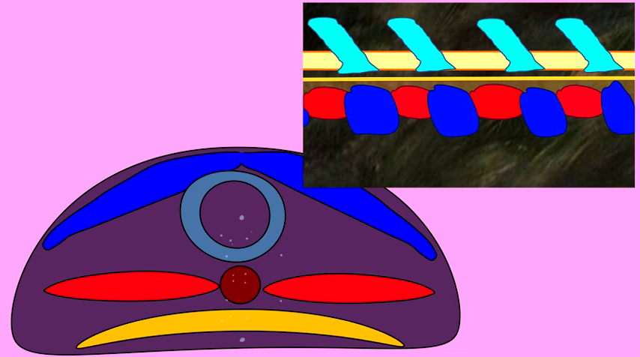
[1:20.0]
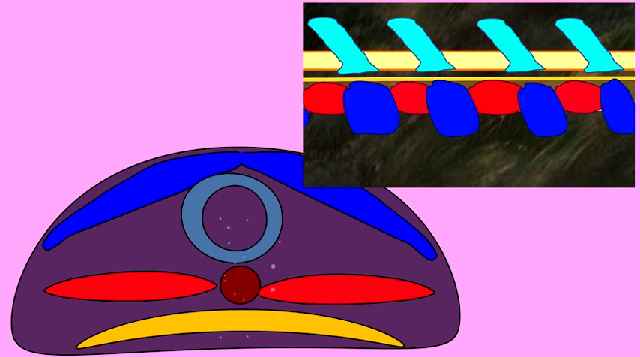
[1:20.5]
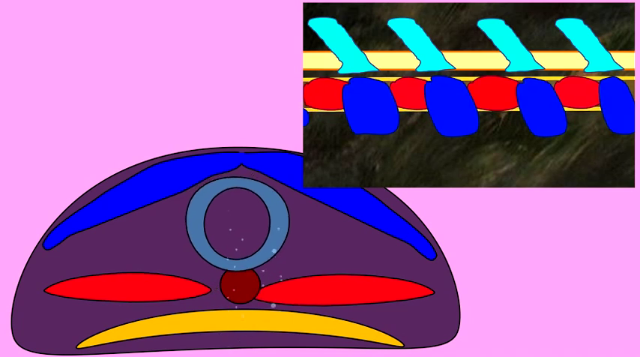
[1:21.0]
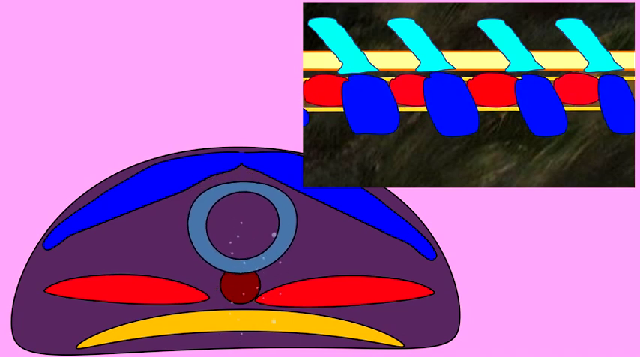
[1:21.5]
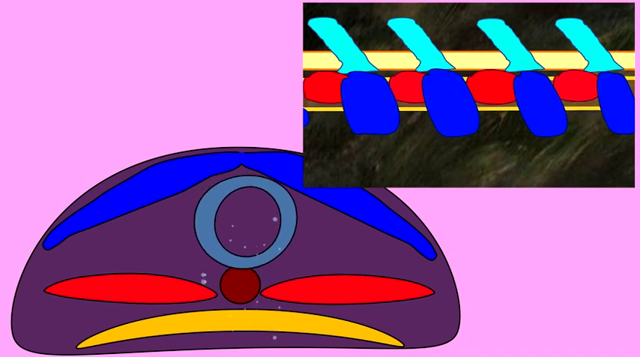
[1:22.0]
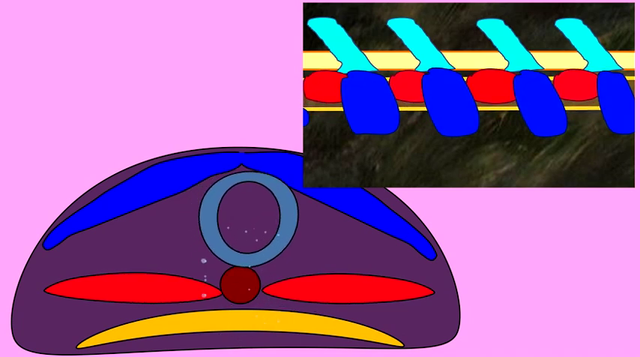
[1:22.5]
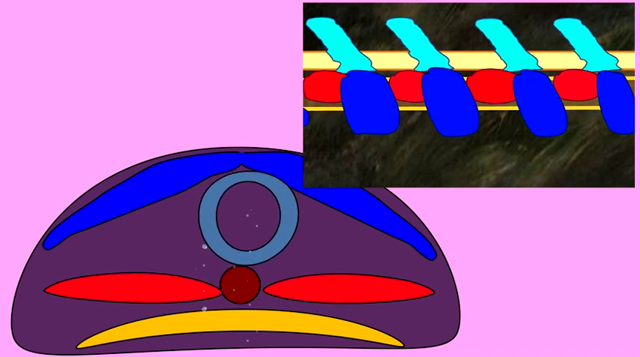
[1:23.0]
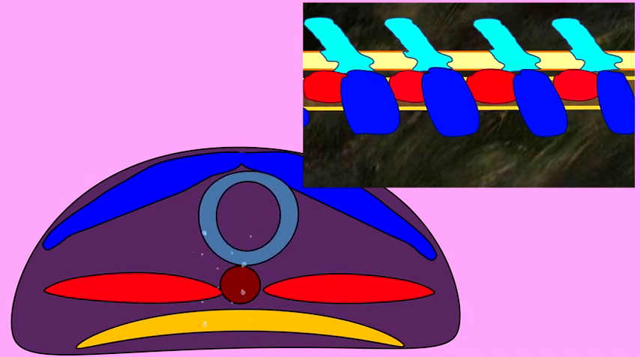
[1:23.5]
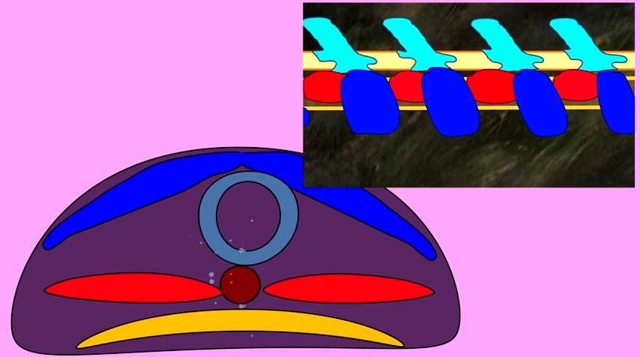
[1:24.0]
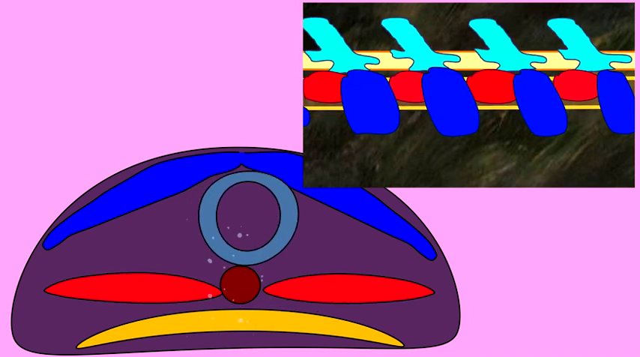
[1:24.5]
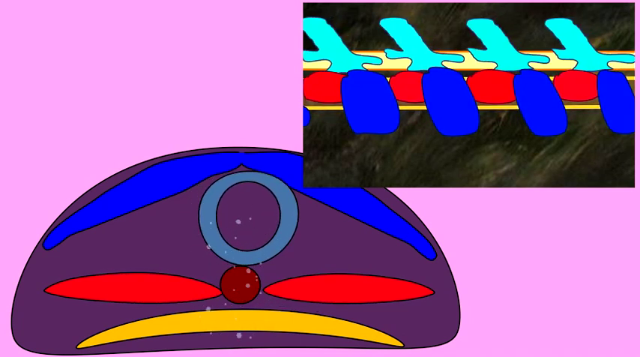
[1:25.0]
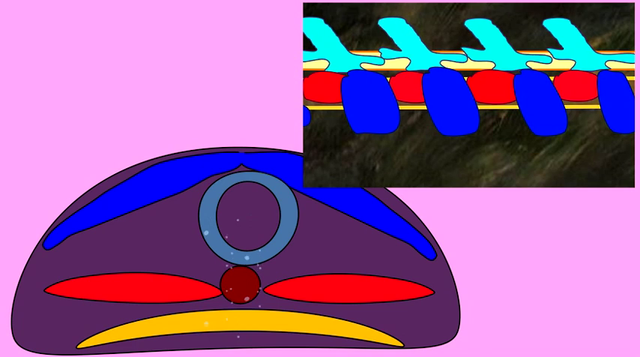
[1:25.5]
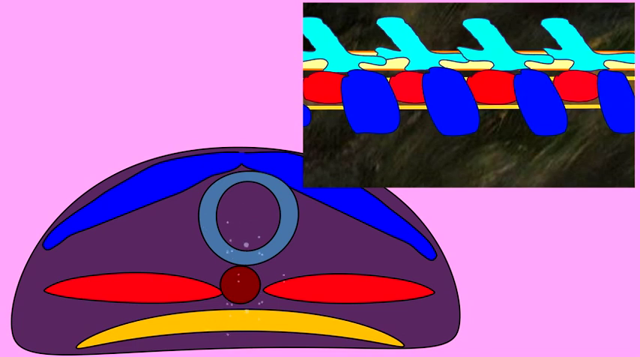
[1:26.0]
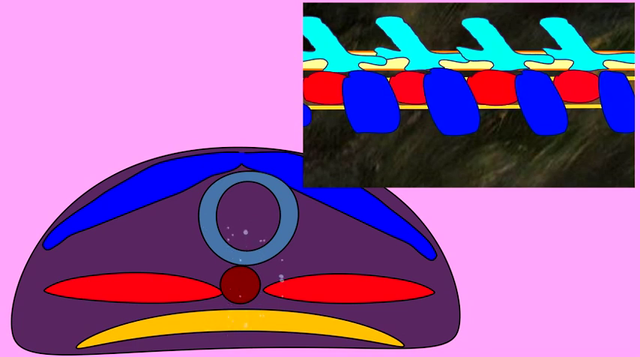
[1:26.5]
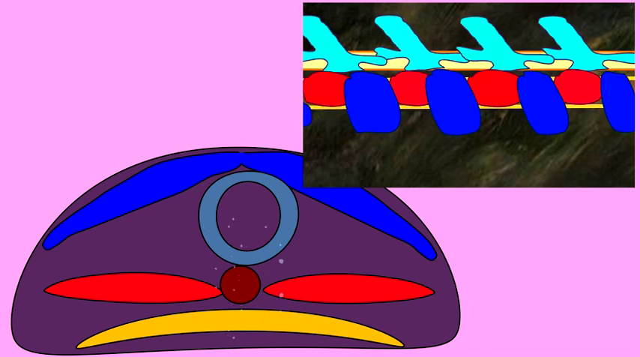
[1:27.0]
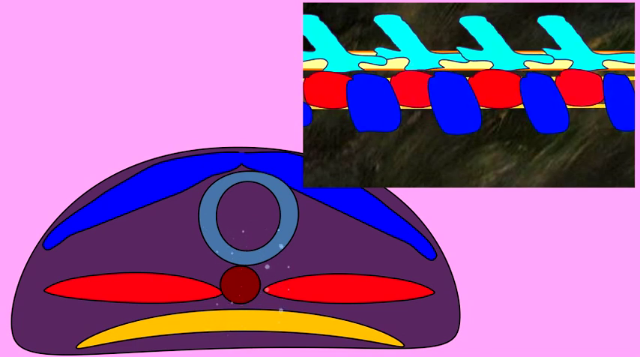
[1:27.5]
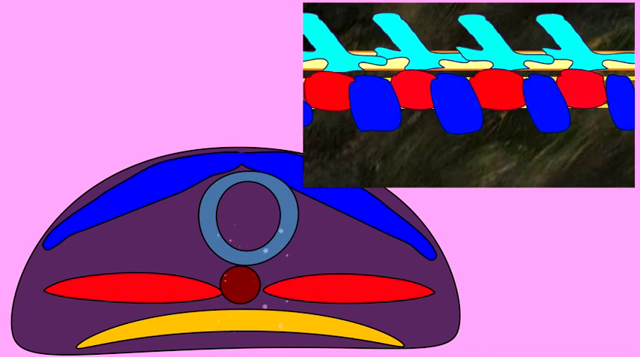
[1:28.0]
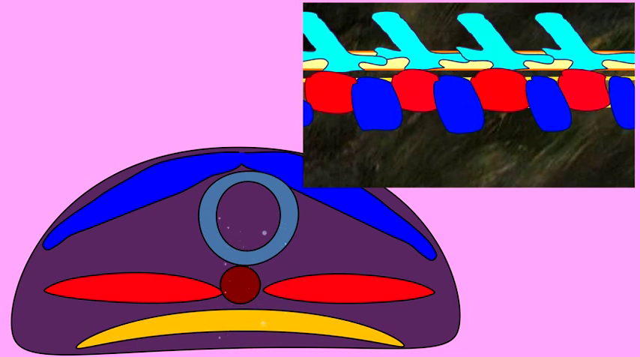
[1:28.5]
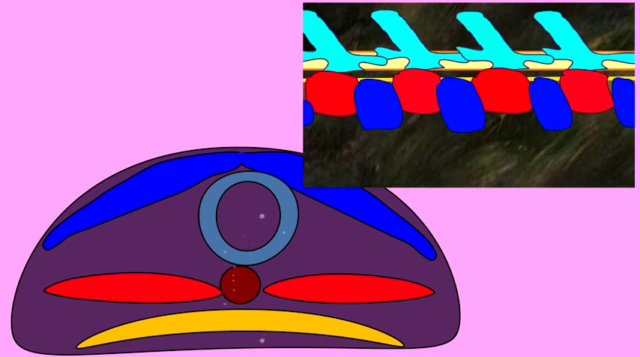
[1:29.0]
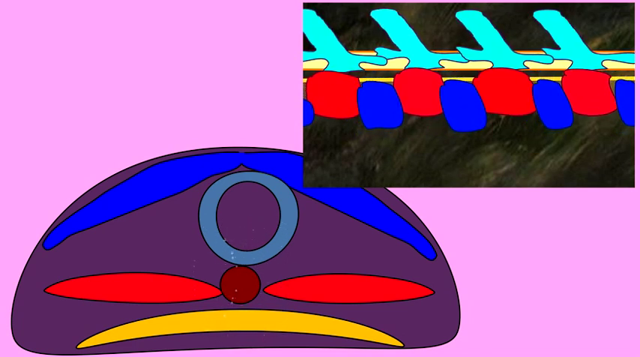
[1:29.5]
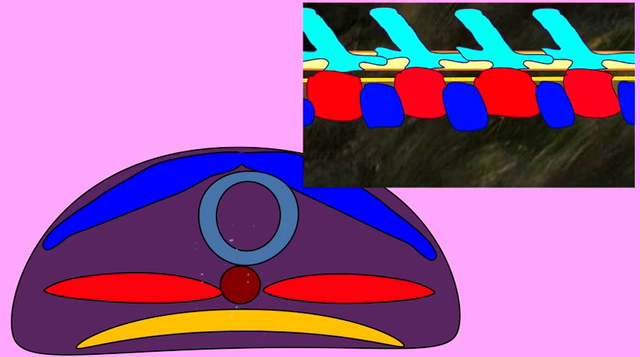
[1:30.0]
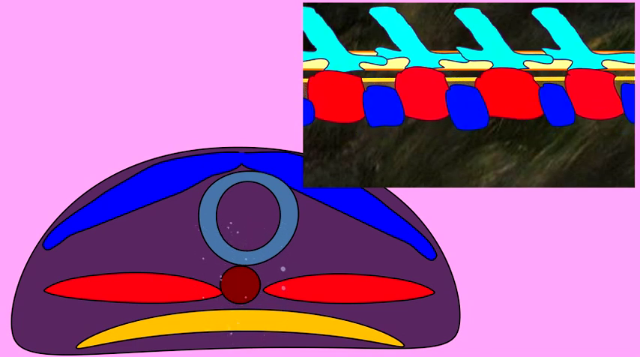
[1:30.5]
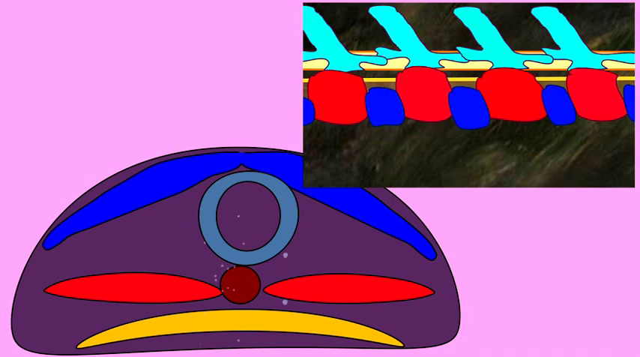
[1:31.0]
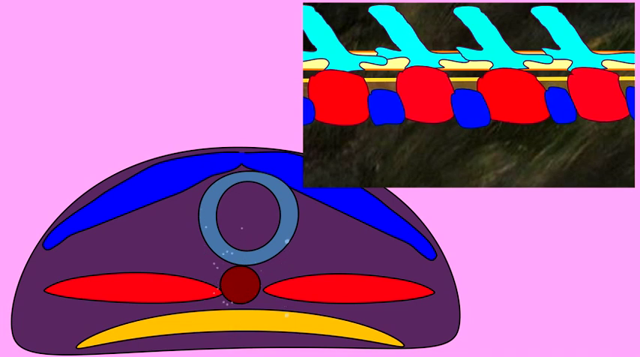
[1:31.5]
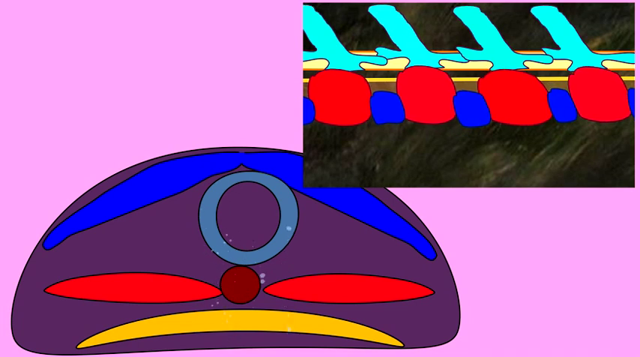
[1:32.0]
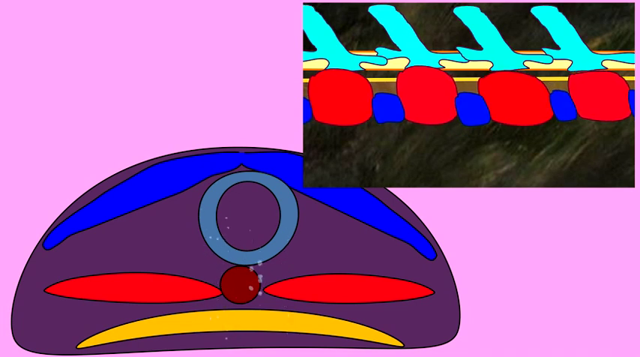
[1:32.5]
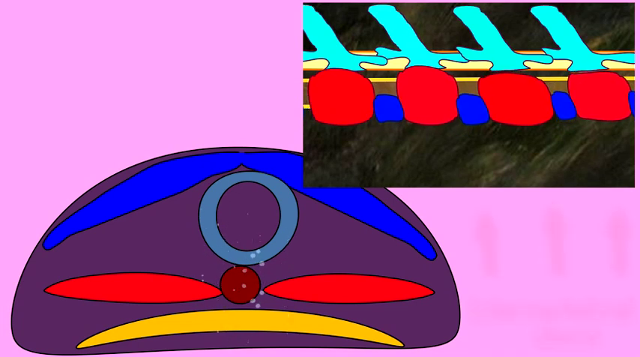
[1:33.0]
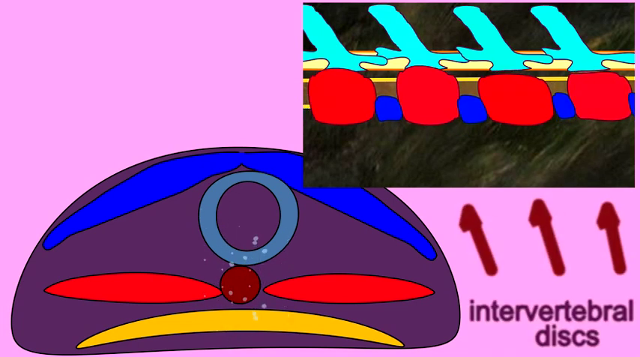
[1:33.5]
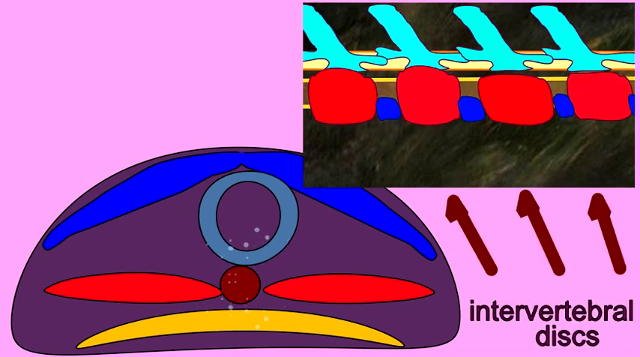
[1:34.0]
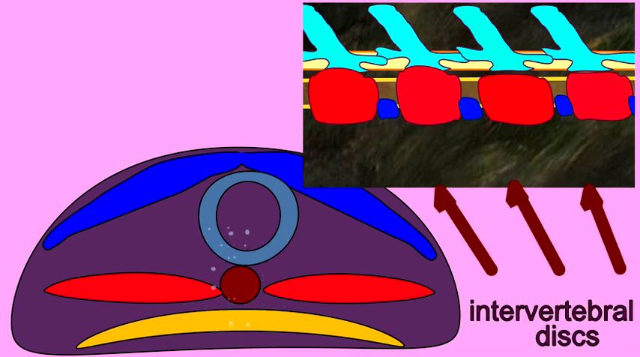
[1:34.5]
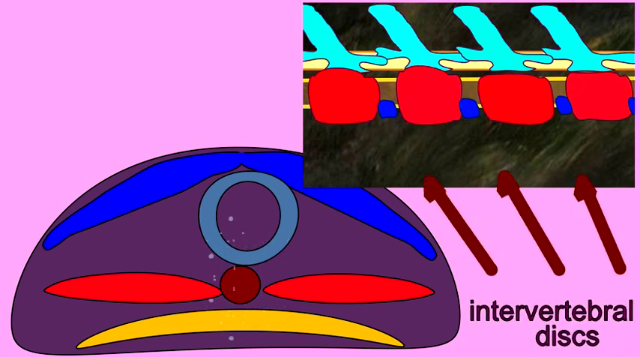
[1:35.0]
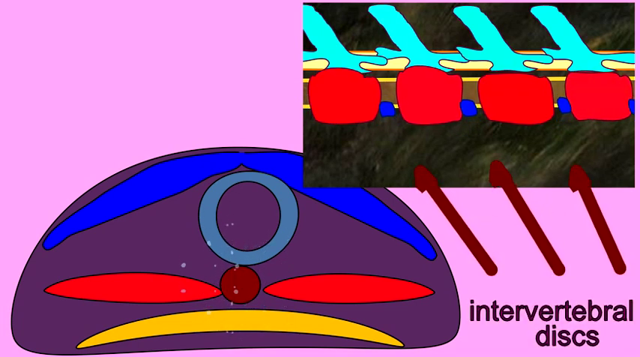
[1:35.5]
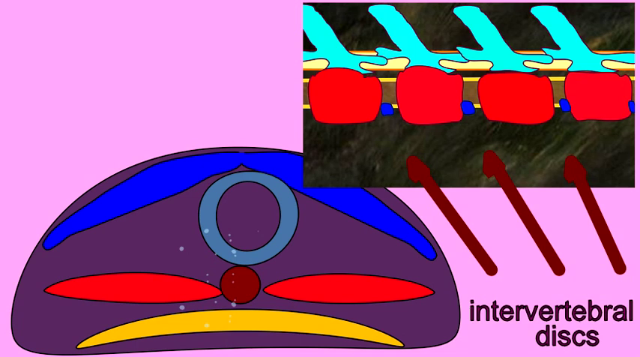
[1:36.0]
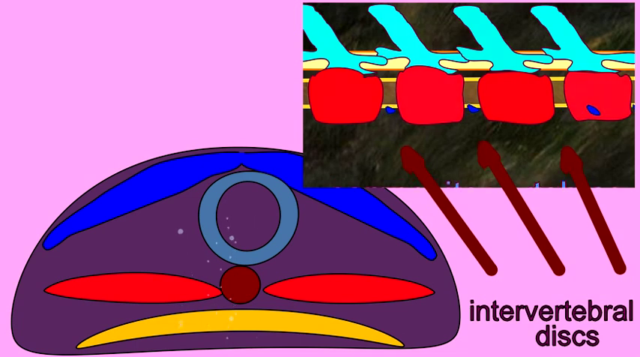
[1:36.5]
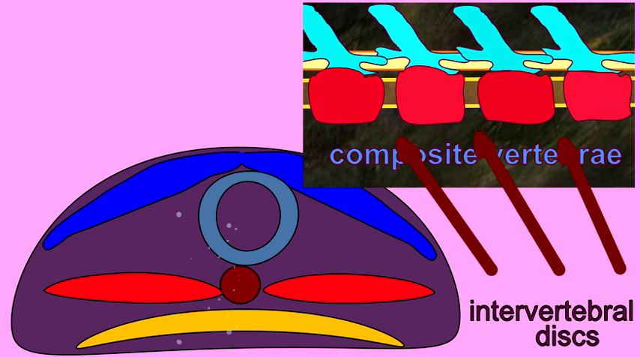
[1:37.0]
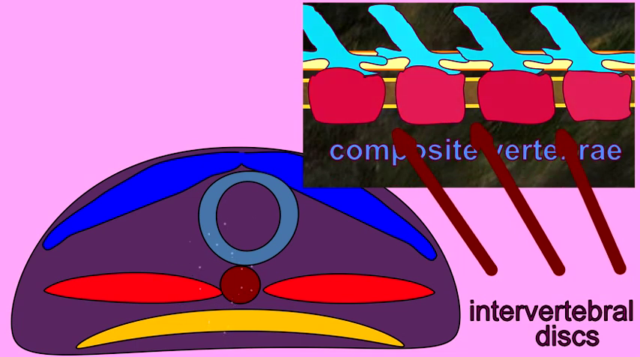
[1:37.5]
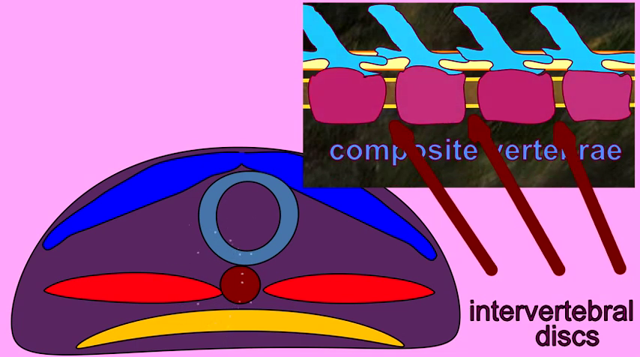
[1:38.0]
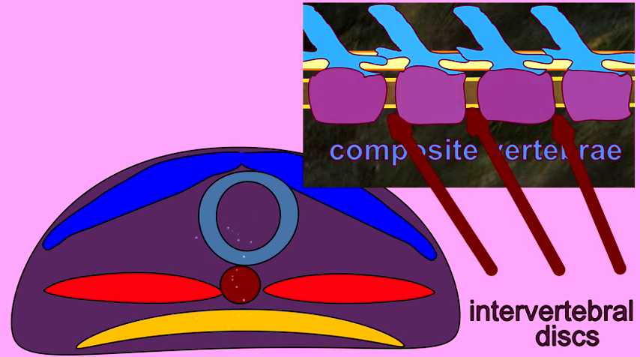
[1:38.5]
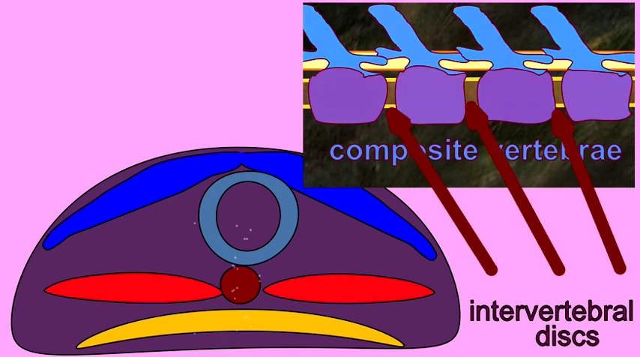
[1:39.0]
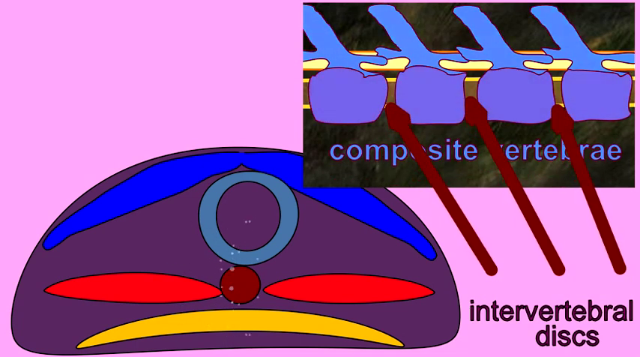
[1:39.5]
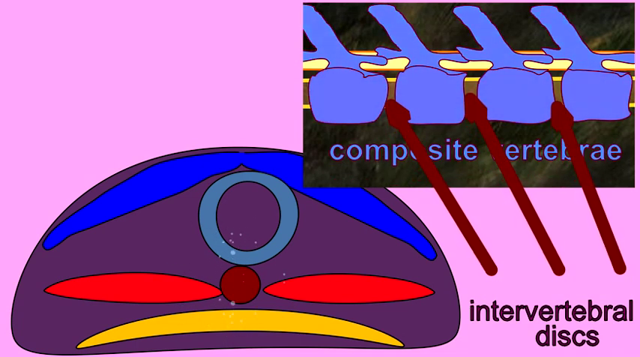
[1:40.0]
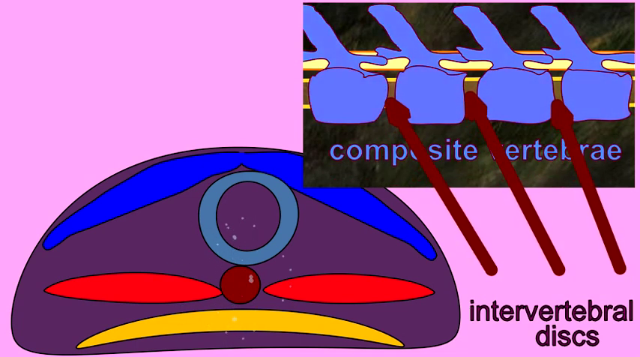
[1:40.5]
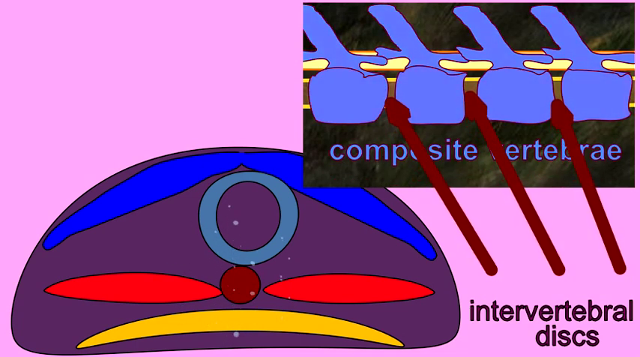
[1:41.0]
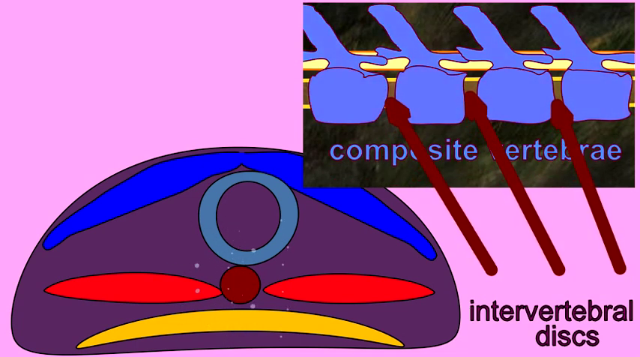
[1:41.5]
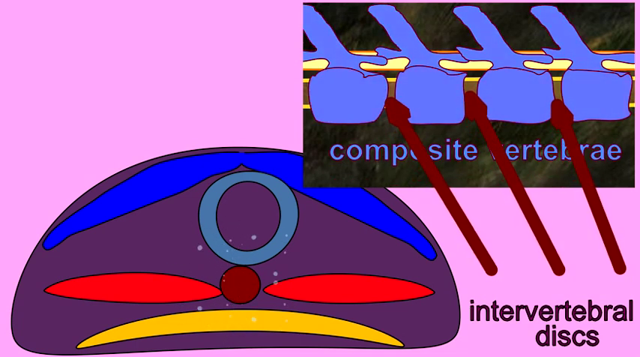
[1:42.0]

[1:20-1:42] The blue circle continues to move around in the diagram. In the box in the top right-hand corner, the blue items are a lot bigger than the red ones. They seem to be squeezing into a smaller area, with the blue intercentra growing a lot longer than the red pleurocentra. The light blue seems to spread out so that it looks like it has arms. Suddenly the red gets extremely big, and the blue intercentra shrinks down to a very small circle that can hardly be seen, then suddenly disappears. The red circles then turn purple. Three red arrows point up to the purple square area, and the words say "composite invertebrae". The arrows continue to point to the middle of the space left where the blue intercentra disappeared.